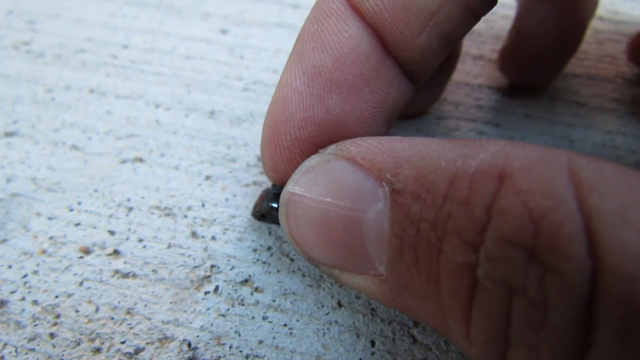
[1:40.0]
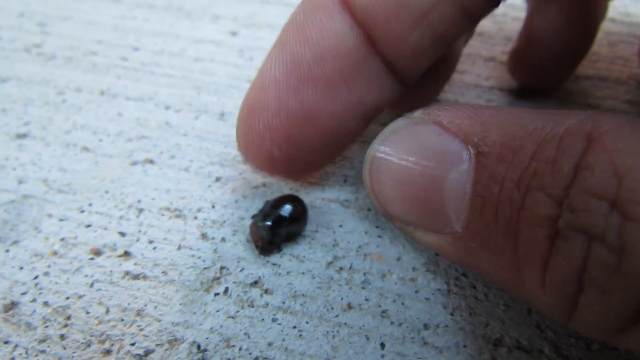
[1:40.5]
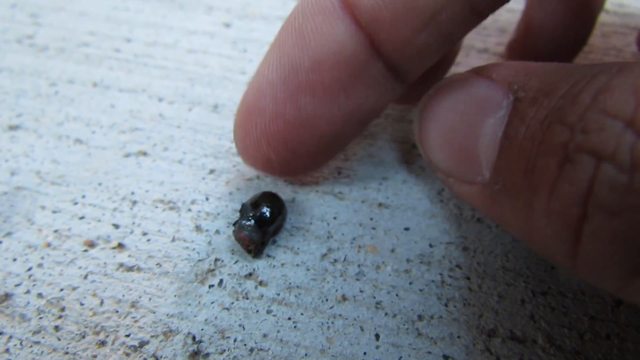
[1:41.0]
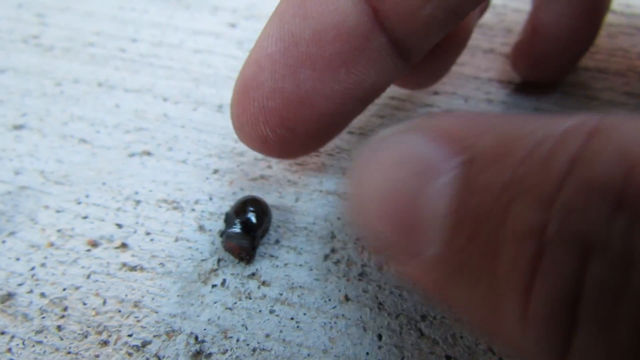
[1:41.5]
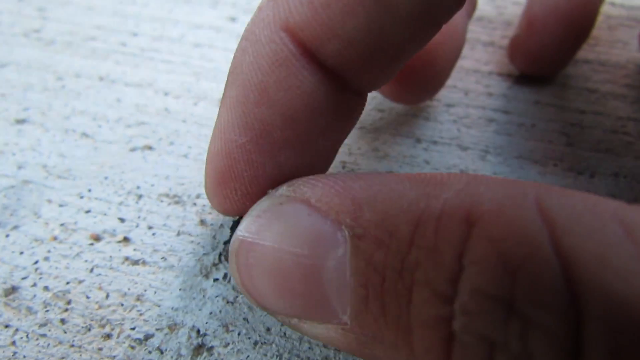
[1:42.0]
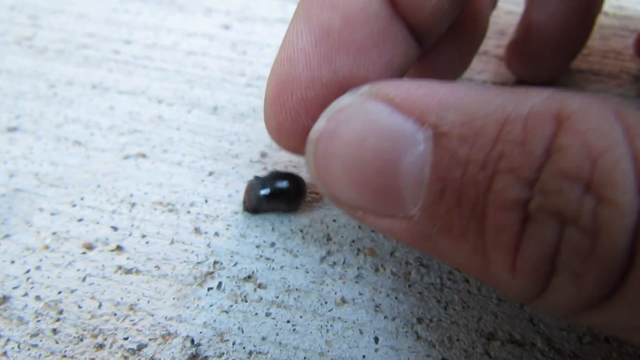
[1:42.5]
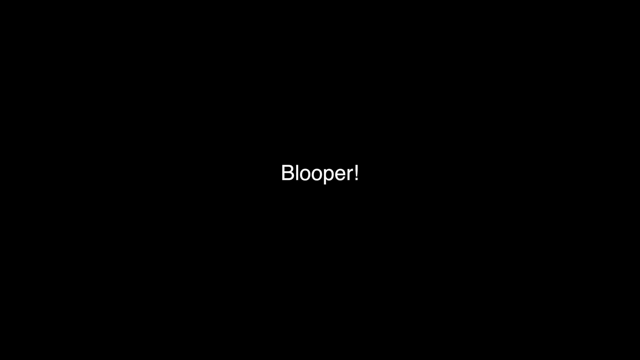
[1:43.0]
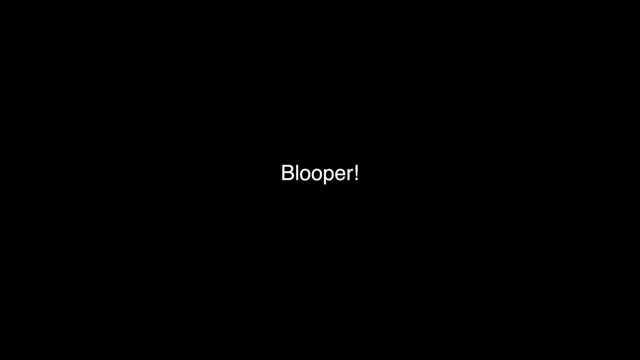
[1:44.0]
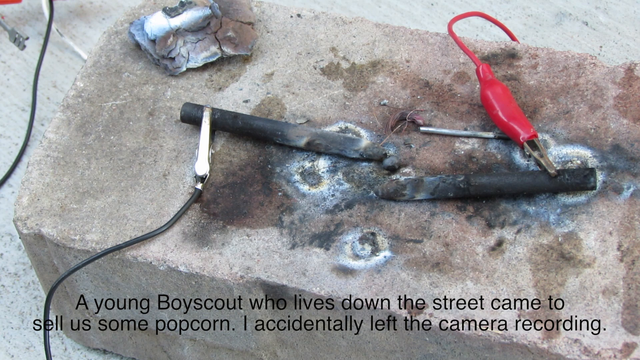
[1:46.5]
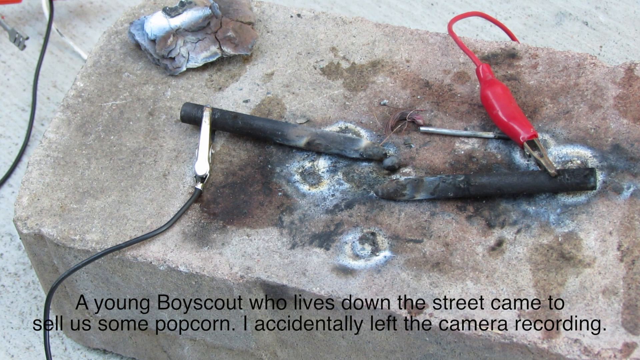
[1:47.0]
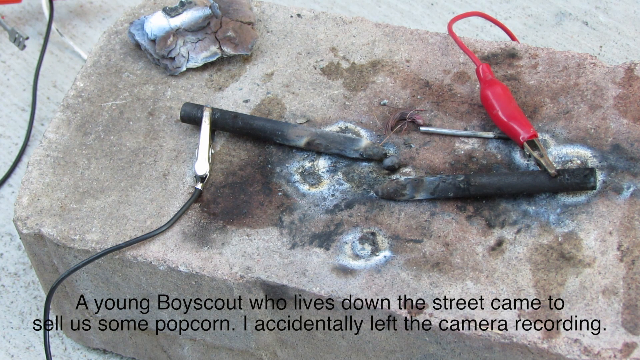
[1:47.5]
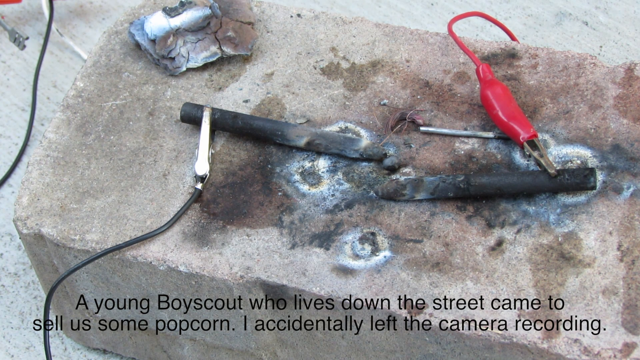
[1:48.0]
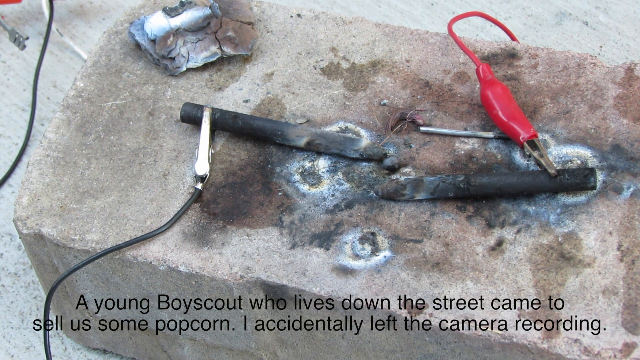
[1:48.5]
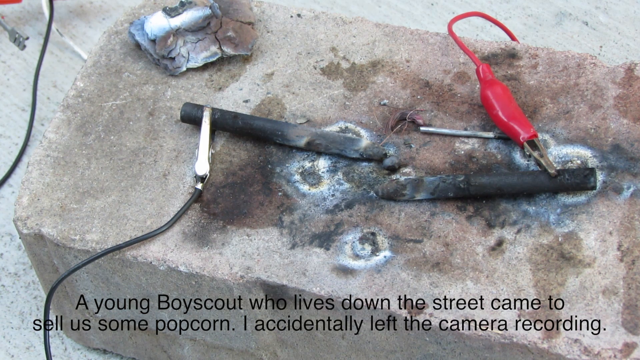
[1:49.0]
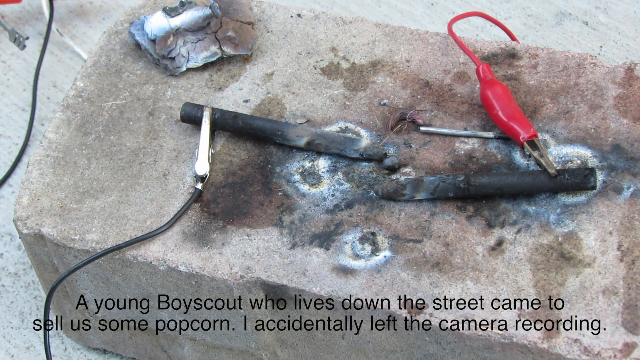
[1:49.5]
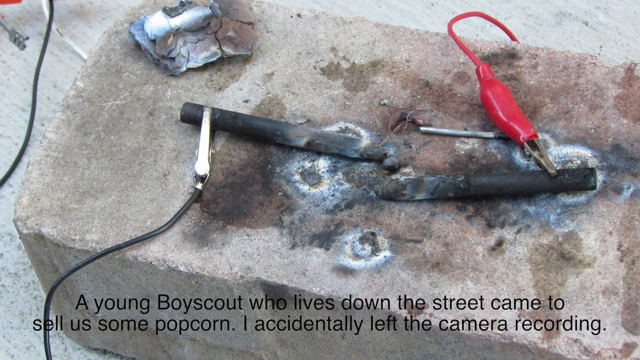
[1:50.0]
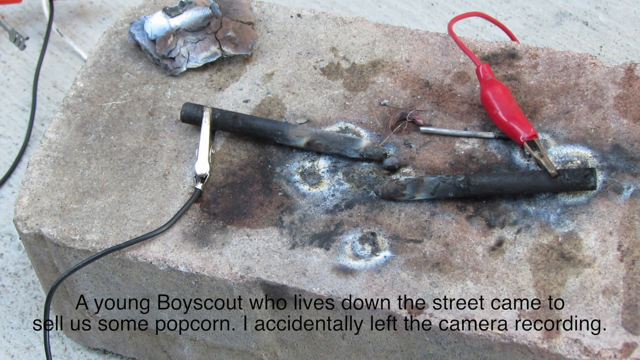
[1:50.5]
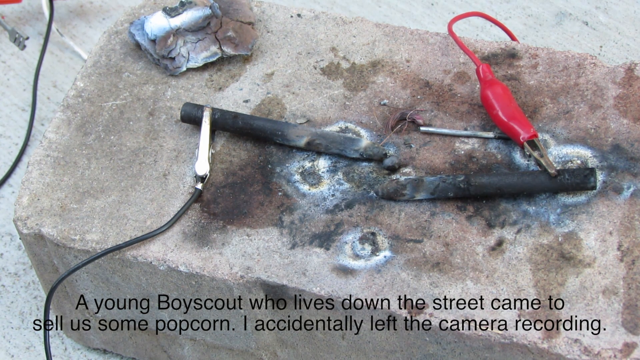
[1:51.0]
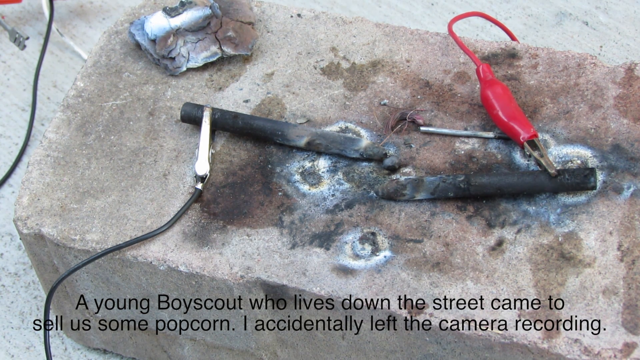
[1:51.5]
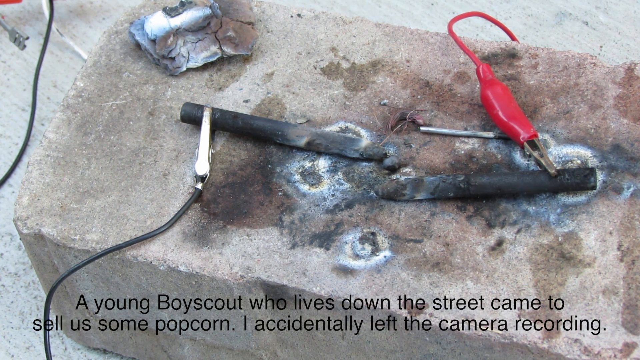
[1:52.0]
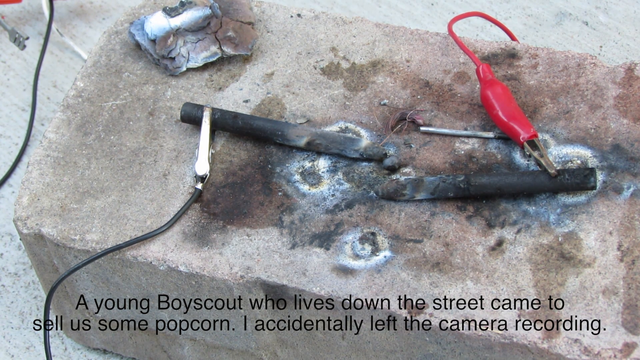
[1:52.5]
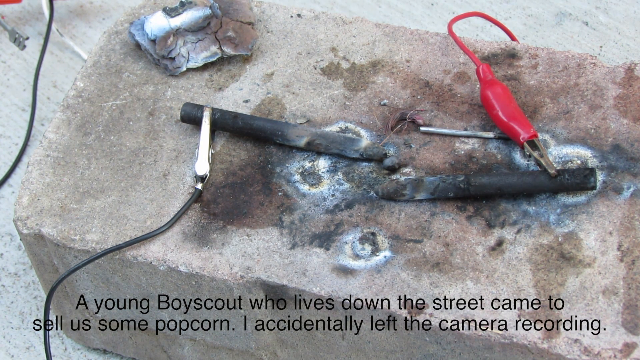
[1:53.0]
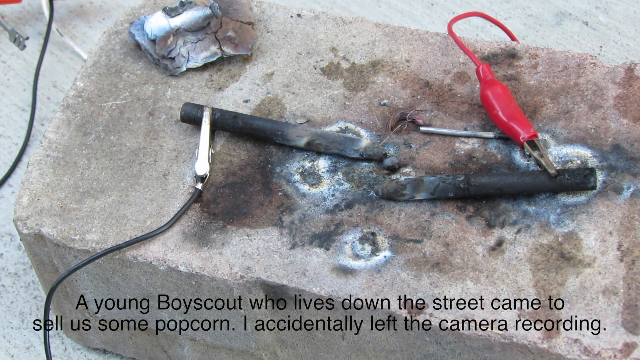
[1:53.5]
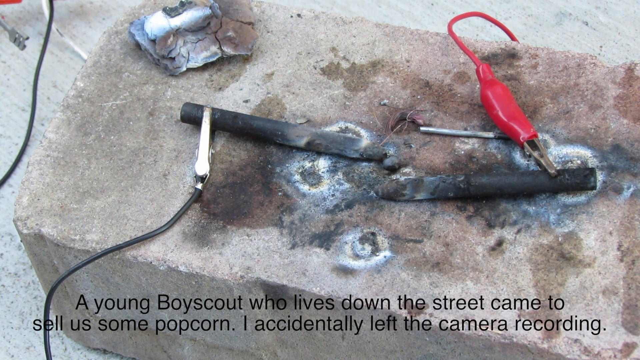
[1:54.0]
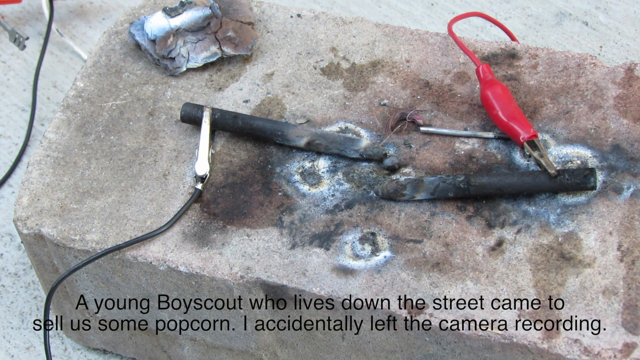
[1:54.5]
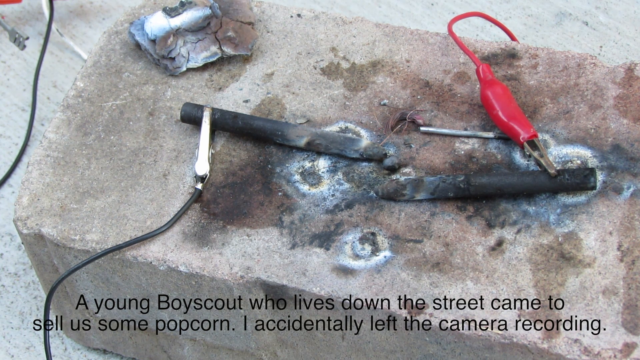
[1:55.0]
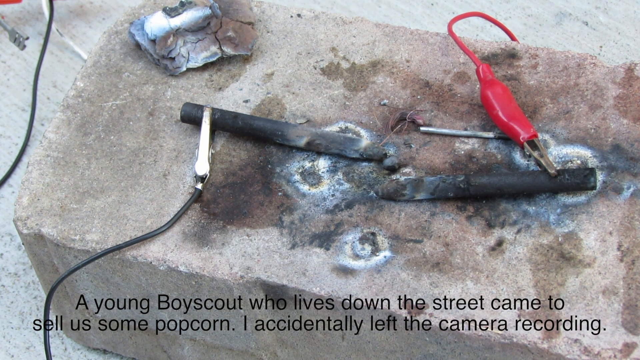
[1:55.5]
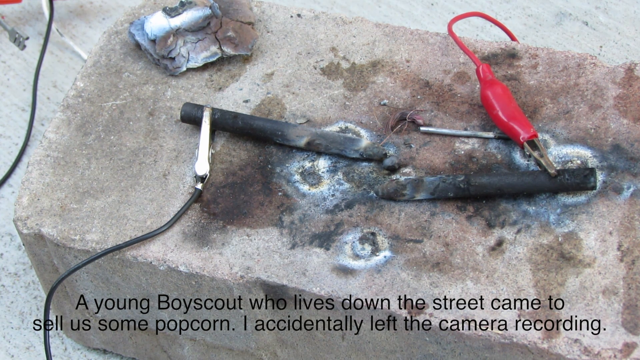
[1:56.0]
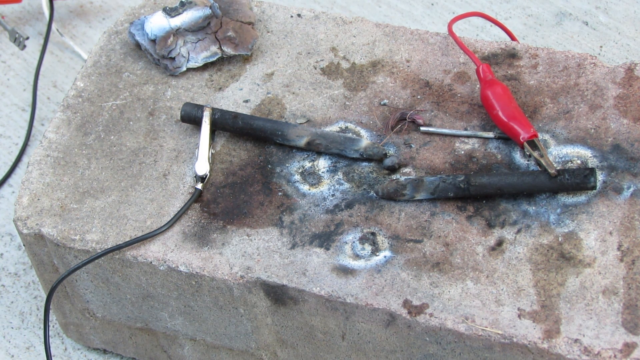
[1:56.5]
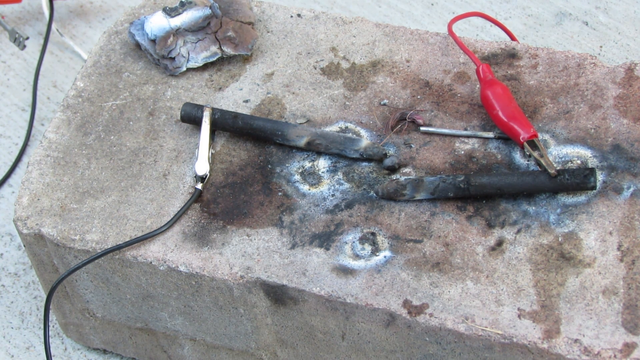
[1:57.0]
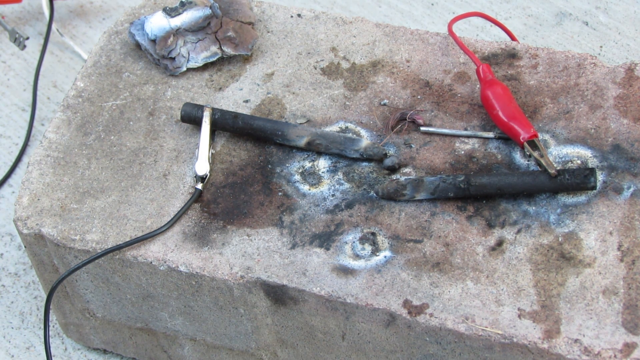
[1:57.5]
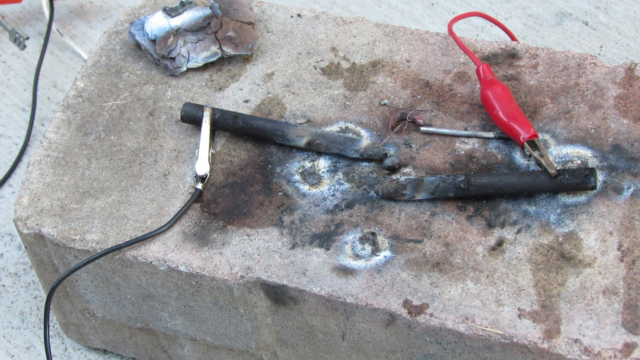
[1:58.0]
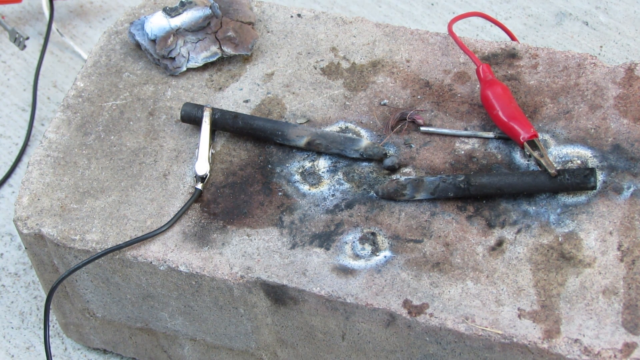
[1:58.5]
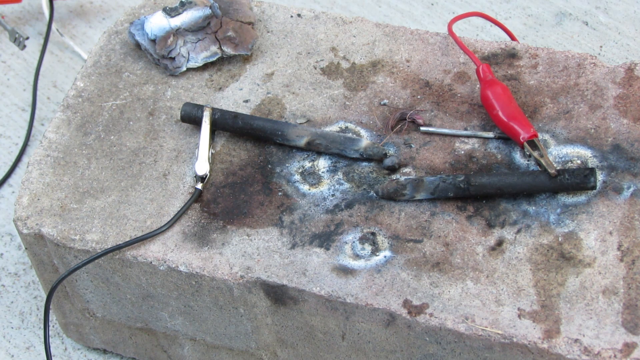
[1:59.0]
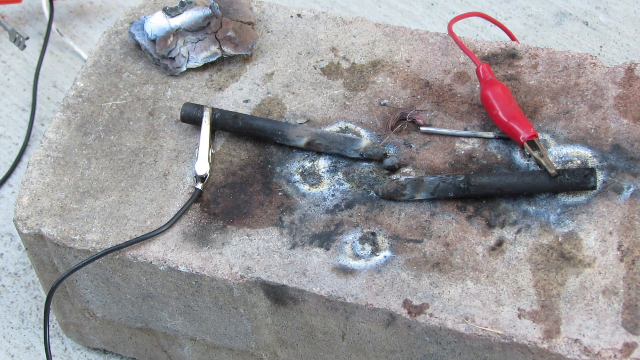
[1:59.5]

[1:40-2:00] The two fingers are in frame holding onto a black object in the center of the screen. The fingers are positioned around the object again, as if about to pick it up; they pick it up for a second, then drop it. The screen goes to black with the word "blooper" in white text in the middle, followed by an exclamation point, held for a few seconds. The video then returns to the shot of the brick and the two black cylinders. Words in black read "a young boy scout who lives down the street came to sell us some popcorn. I accidentally left the camera recording." The shot of the brick and the tools continues.